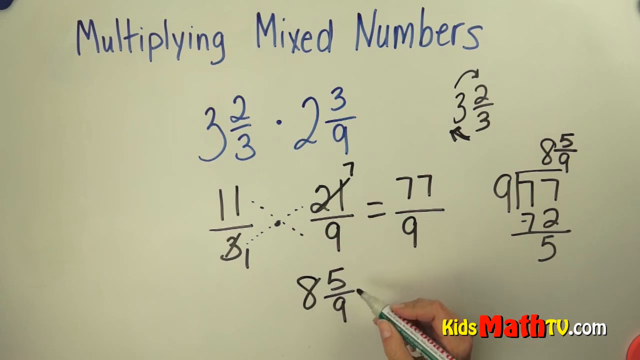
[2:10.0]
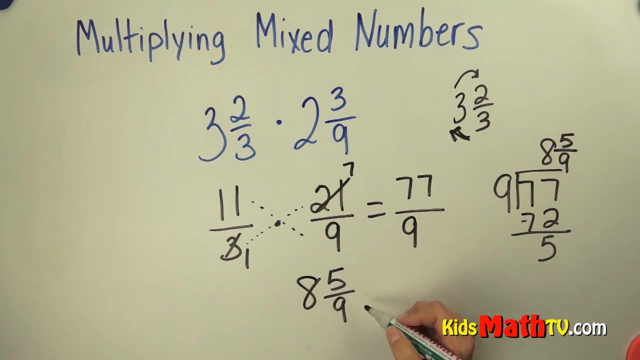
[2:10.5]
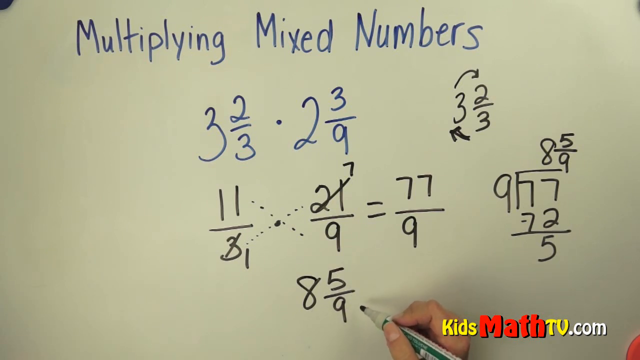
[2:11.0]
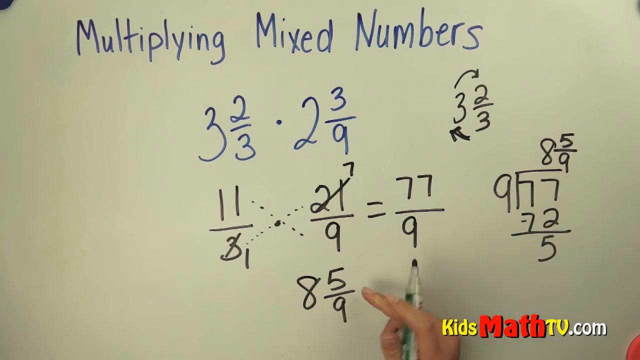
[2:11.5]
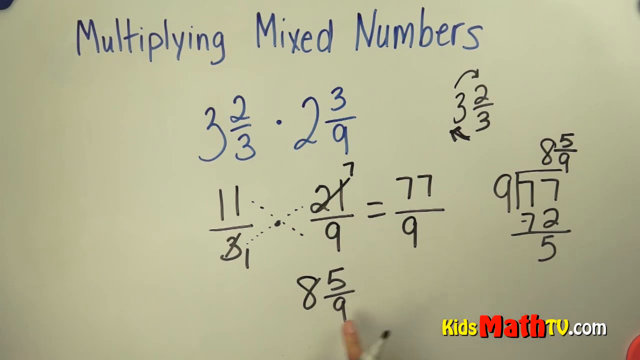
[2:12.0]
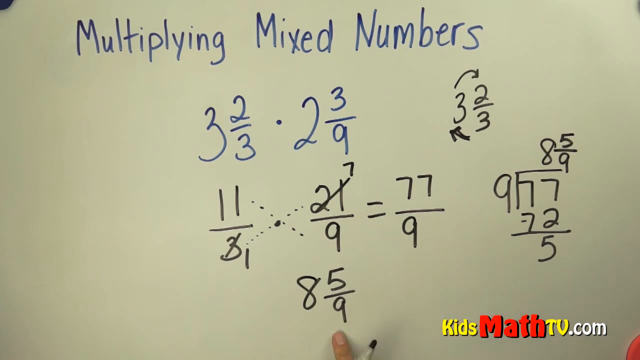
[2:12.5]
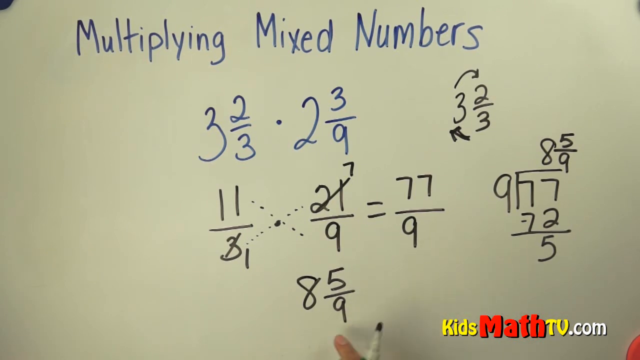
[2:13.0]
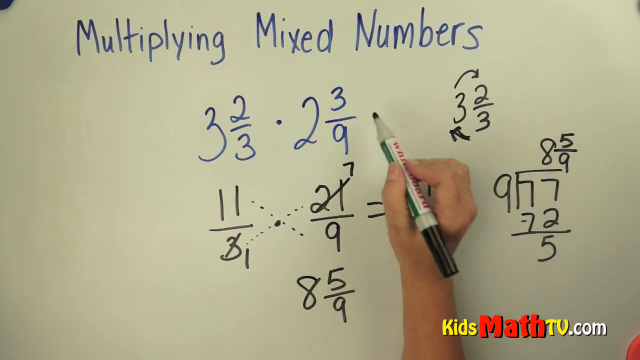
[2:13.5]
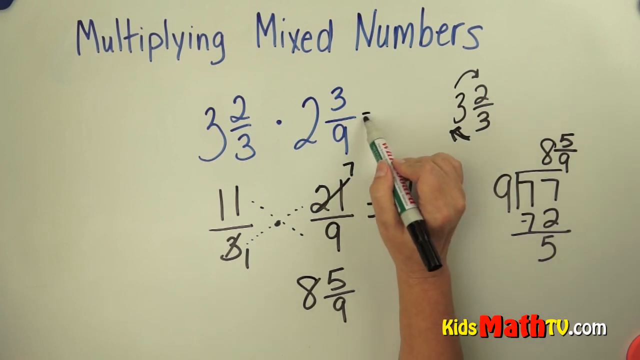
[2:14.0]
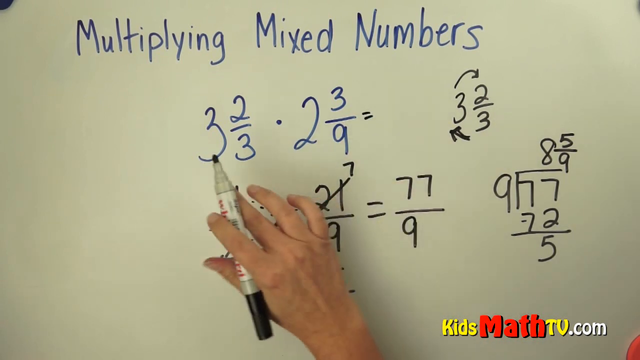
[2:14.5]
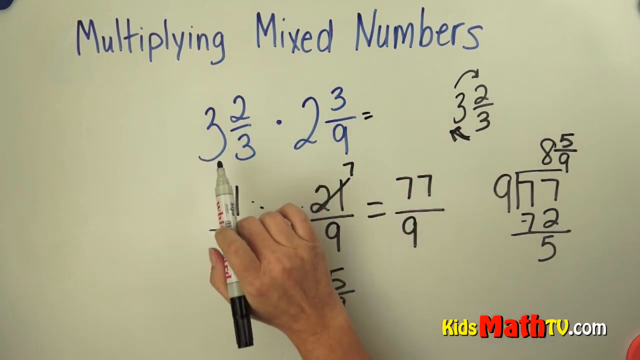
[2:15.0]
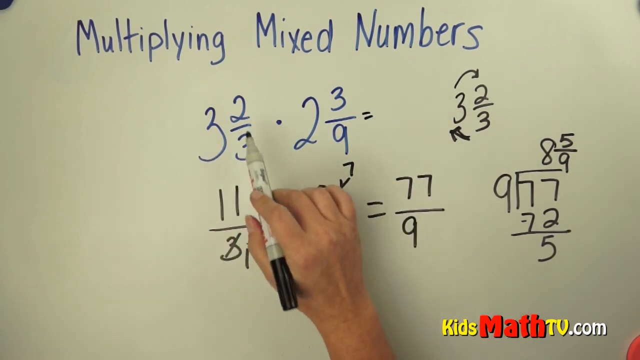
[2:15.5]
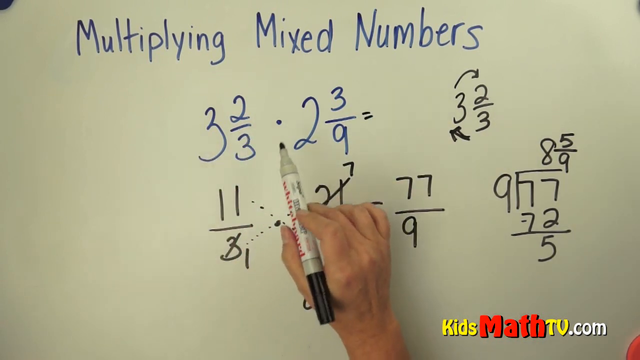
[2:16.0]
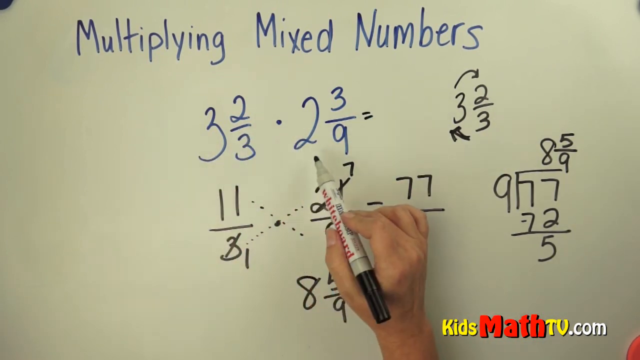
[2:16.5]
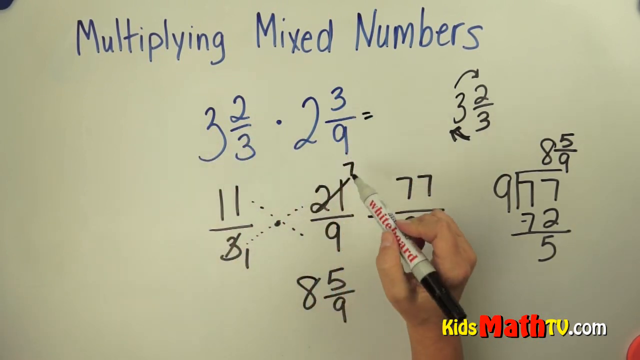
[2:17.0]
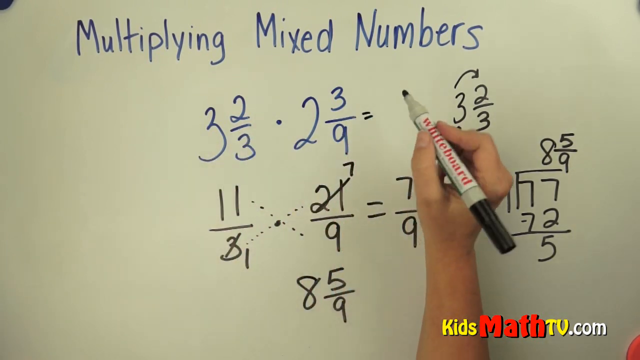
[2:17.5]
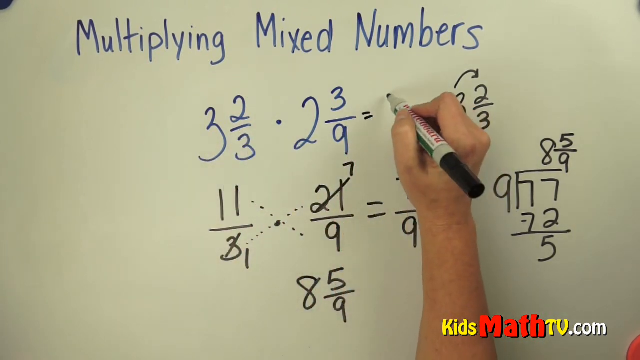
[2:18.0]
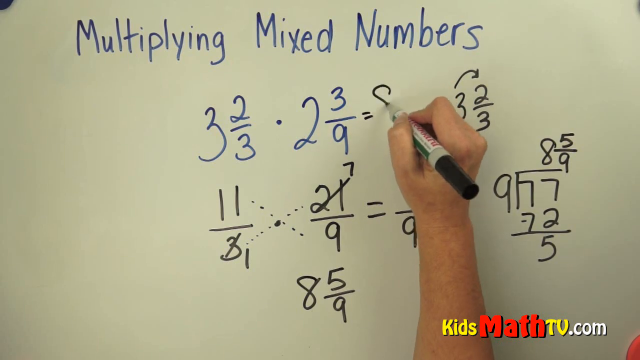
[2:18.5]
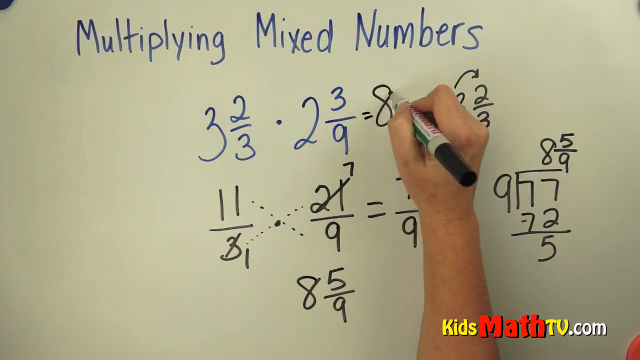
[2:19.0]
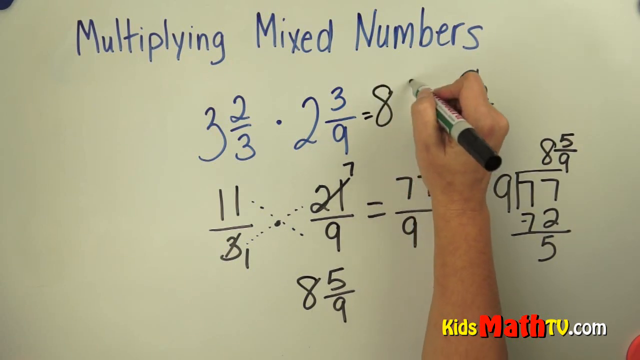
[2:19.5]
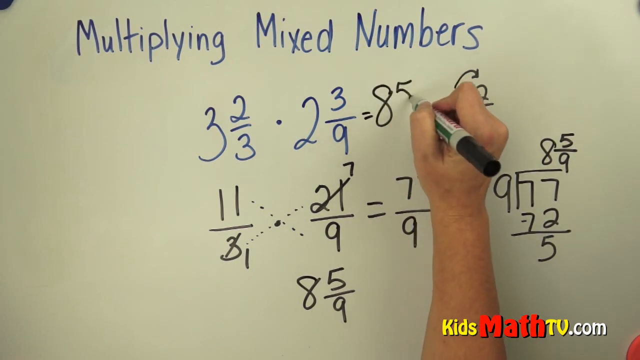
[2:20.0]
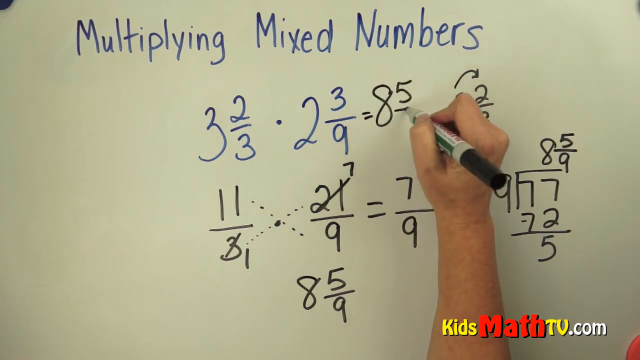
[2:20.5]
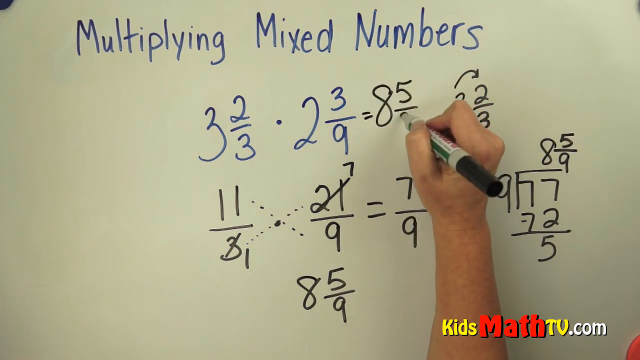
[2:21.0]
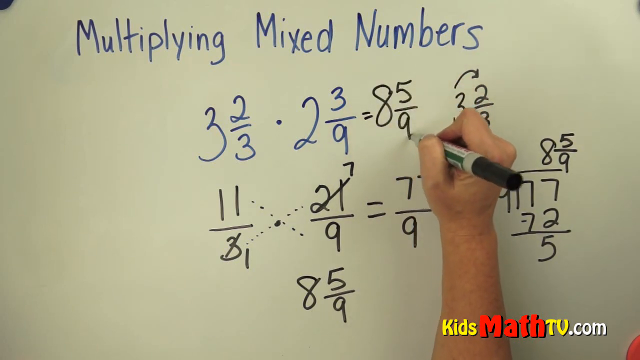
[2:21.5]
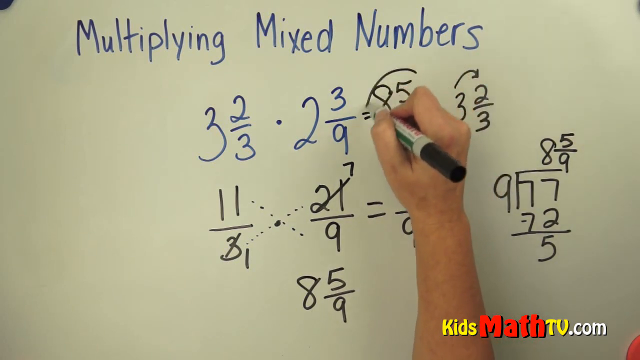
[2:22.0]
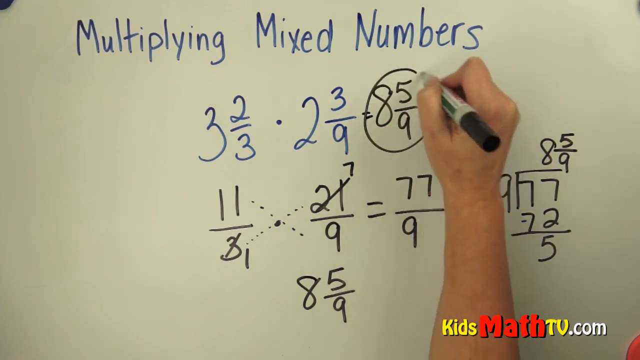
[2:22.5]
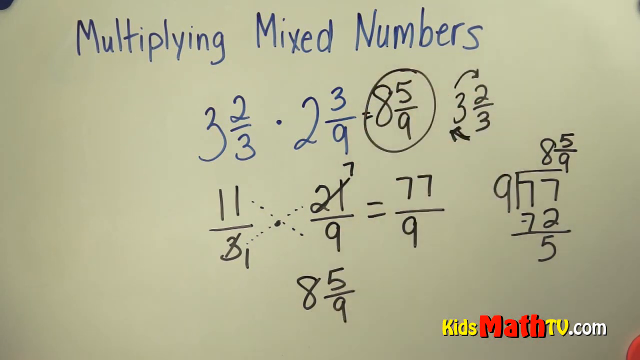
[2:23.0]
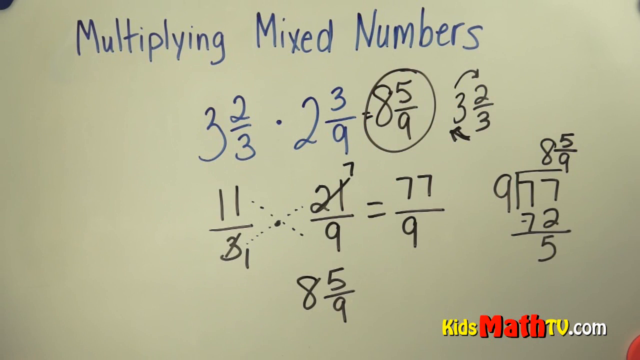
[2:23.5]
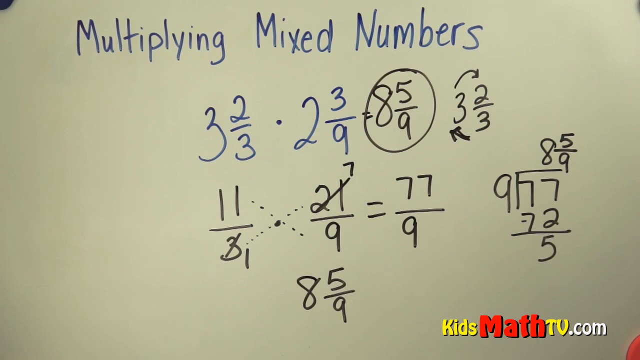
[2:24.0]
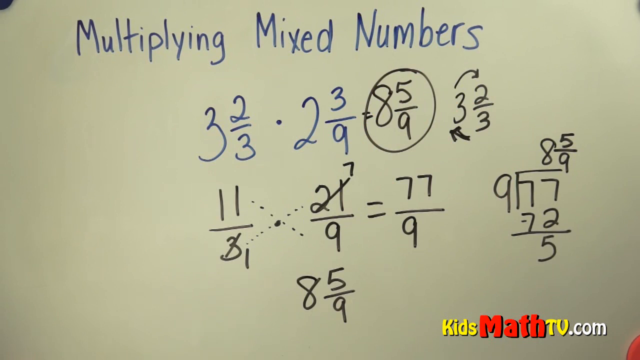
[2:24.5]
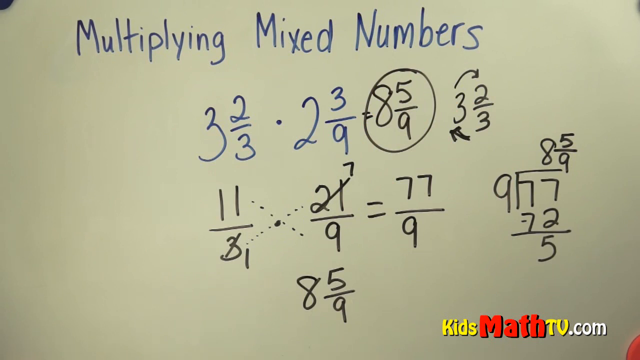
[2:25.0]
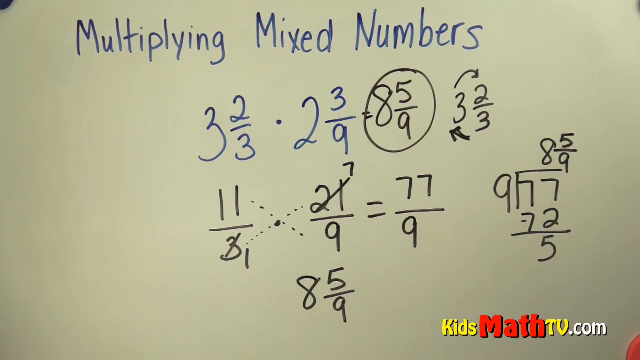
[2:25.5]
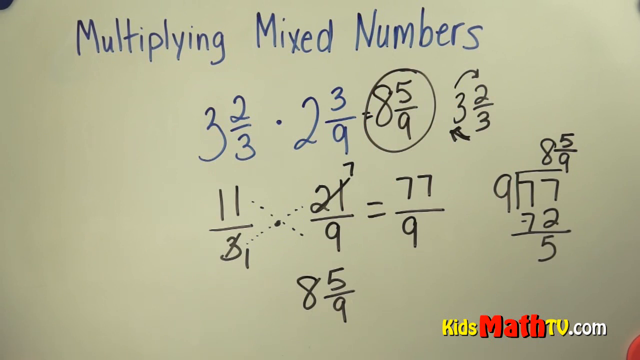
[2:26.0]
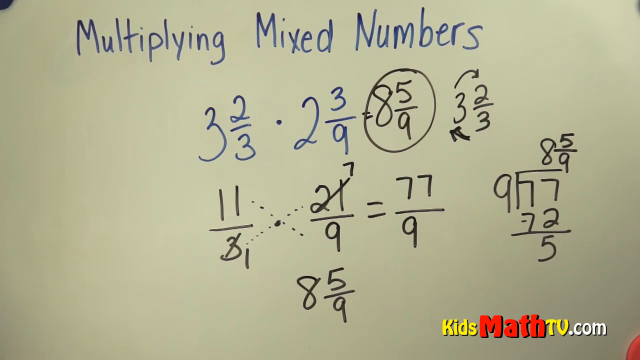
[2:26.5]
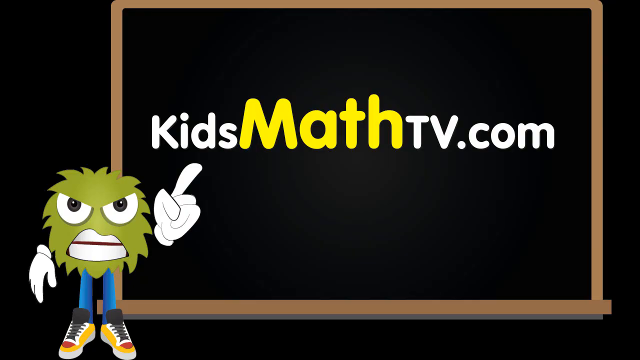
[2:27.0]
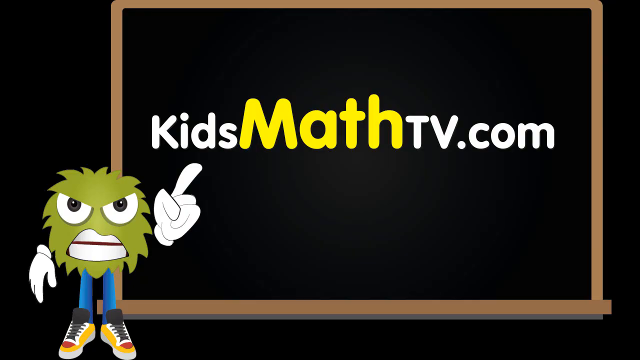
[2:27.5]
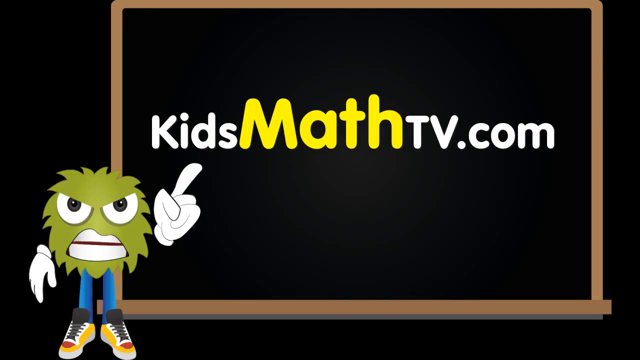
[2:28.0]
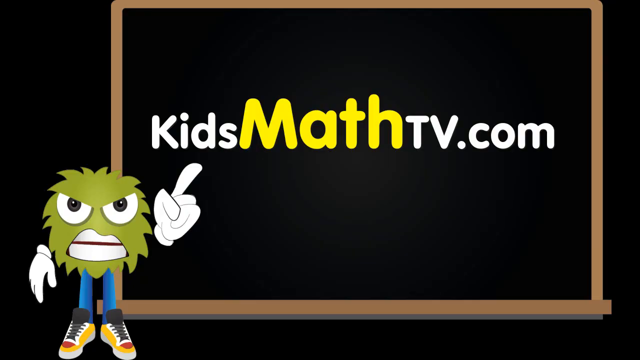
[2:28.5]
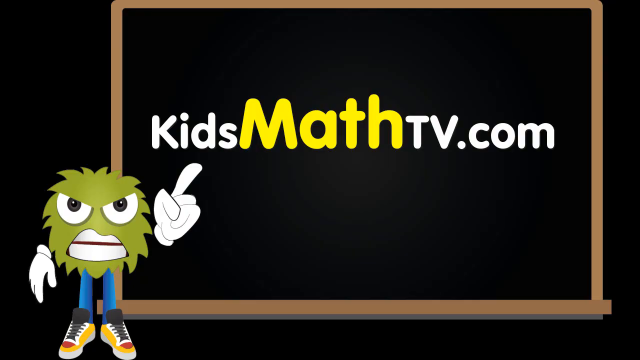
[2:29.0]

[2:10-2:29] The whiteboard shows the blue heading "multiplying mixed numbers" with three and two thirds and two and three ninths in blue beneath it. Below, in black, are 11 over 1 and 7 over 9, equal to 77 over 9, and below that the division of 77 by 9 written as eight and five ninths. The hand disappears from the screen briefly and reappears holding the felt tip pen between the thumb and index finger. It moves the pen back and forth between different parts of the numbers, indicating an explanation, then writes an equal sign followed by eight and five ninths and draws a circle around it, marking it as the solution.